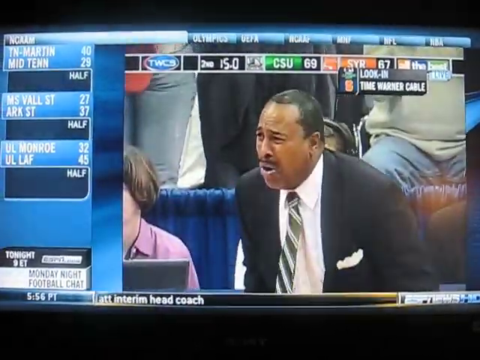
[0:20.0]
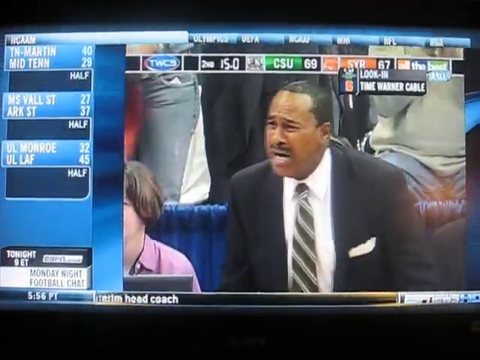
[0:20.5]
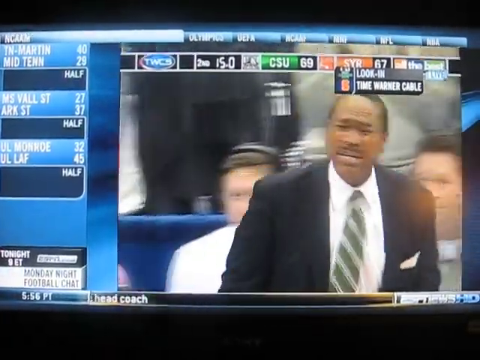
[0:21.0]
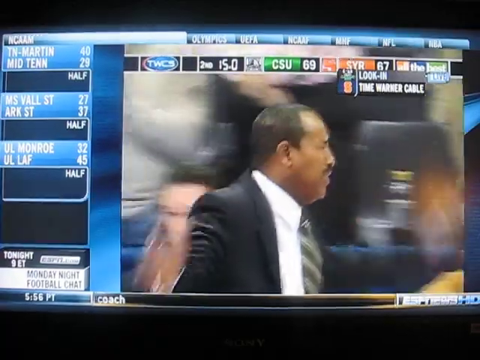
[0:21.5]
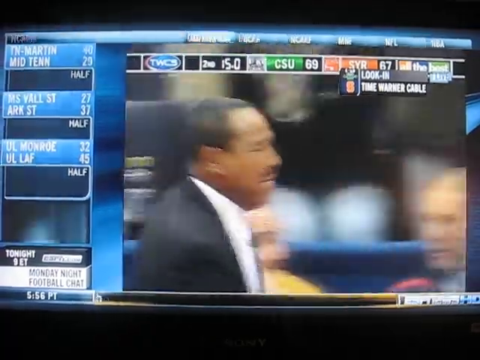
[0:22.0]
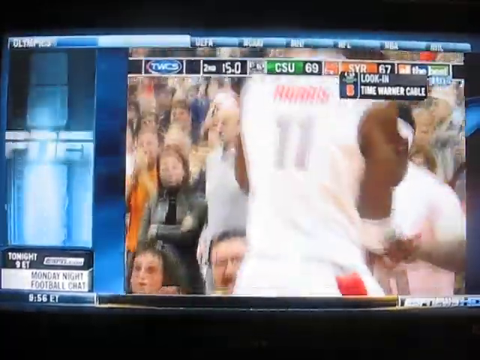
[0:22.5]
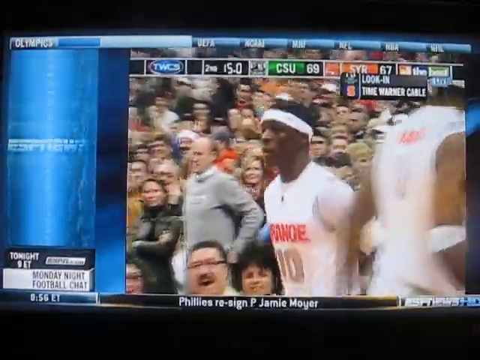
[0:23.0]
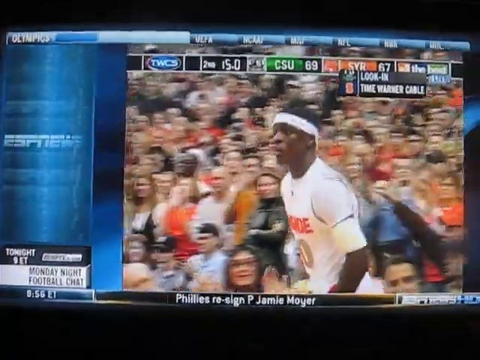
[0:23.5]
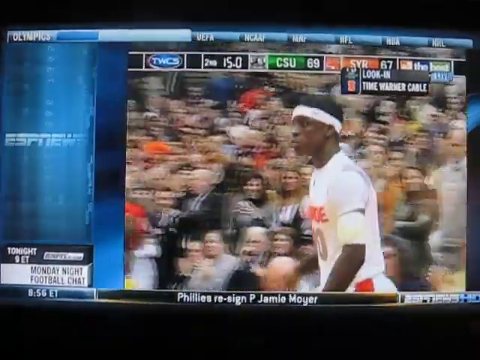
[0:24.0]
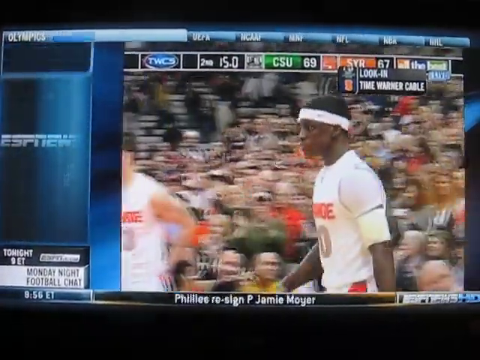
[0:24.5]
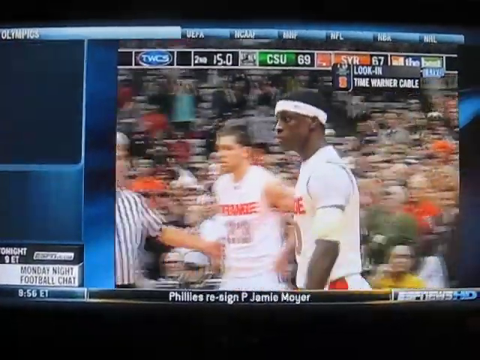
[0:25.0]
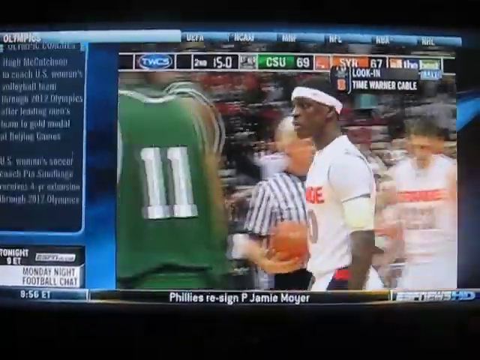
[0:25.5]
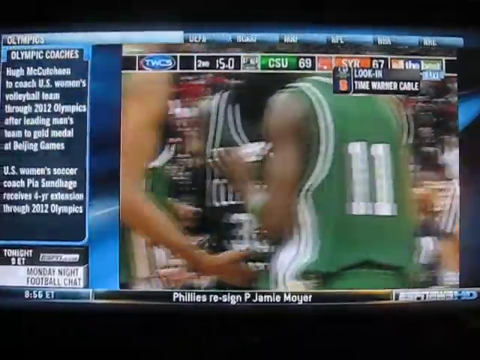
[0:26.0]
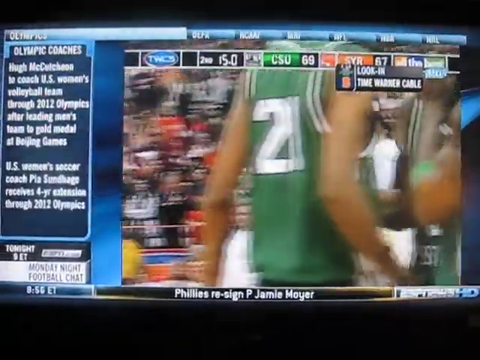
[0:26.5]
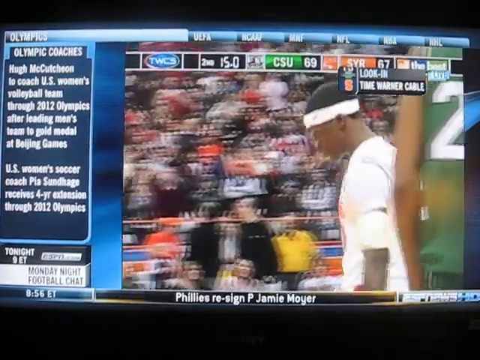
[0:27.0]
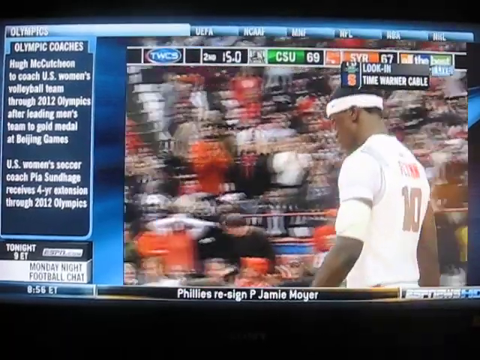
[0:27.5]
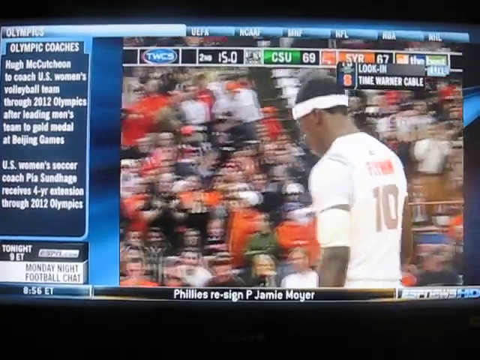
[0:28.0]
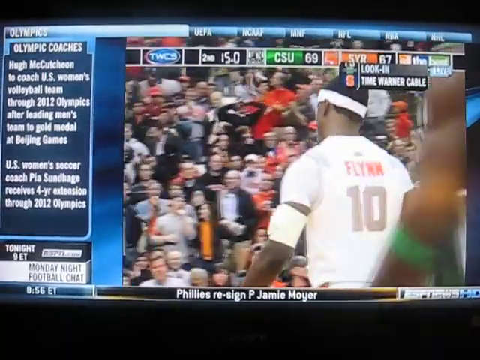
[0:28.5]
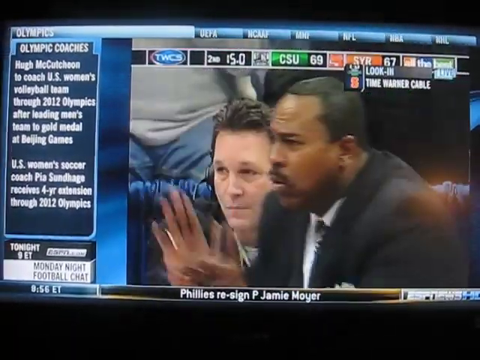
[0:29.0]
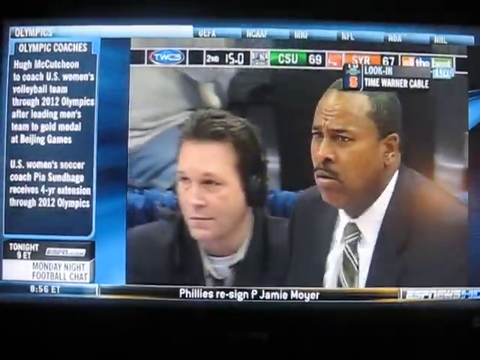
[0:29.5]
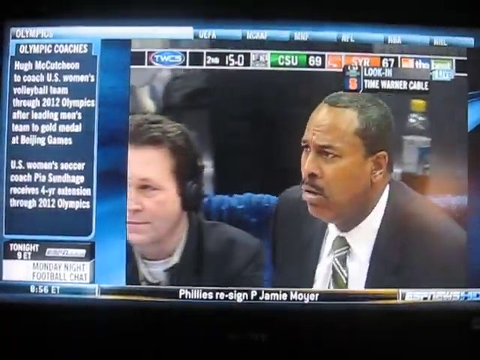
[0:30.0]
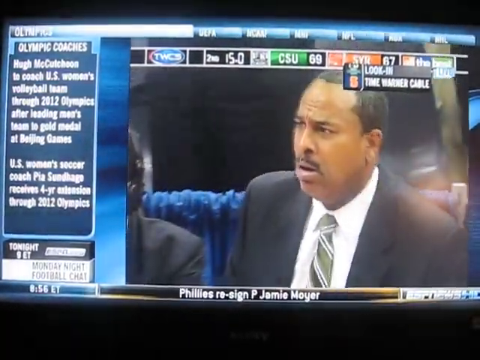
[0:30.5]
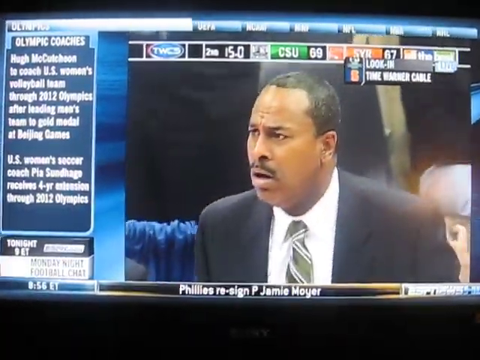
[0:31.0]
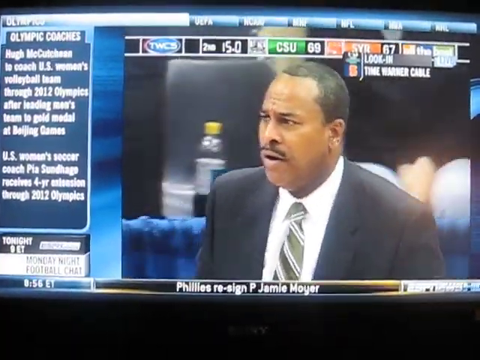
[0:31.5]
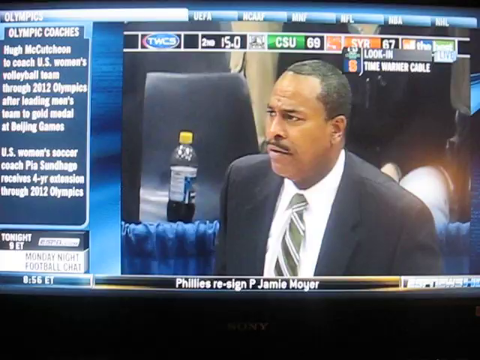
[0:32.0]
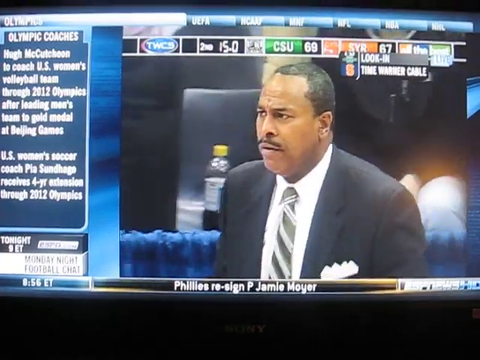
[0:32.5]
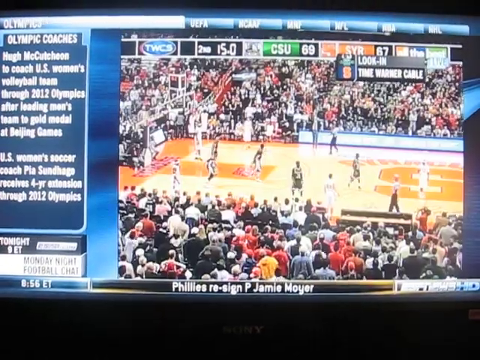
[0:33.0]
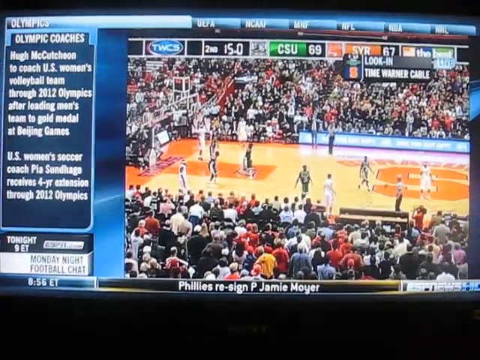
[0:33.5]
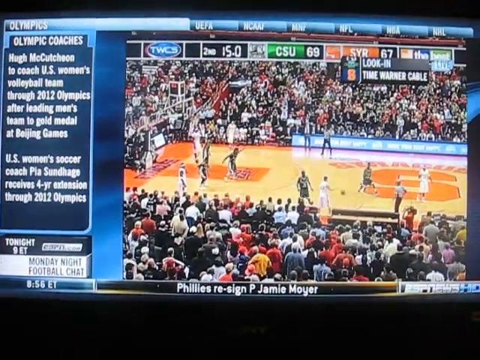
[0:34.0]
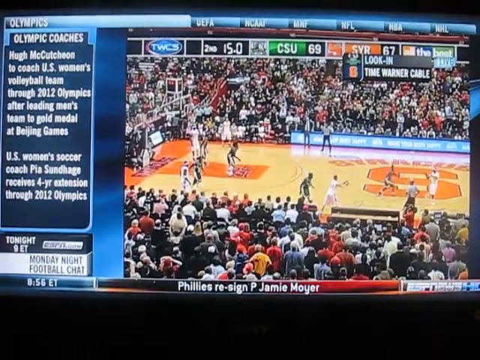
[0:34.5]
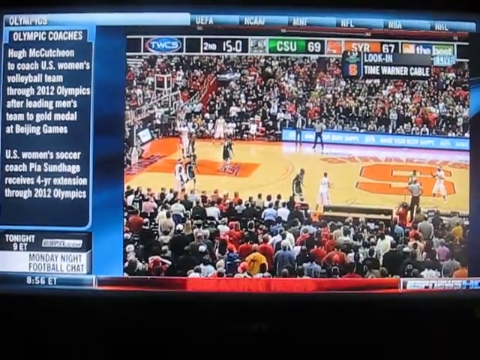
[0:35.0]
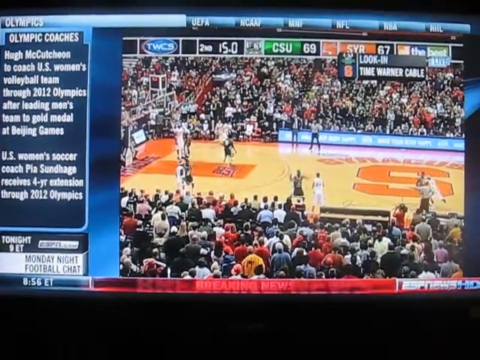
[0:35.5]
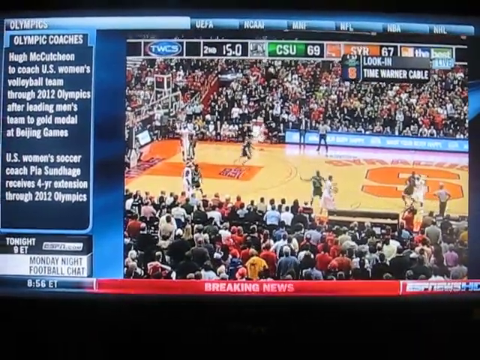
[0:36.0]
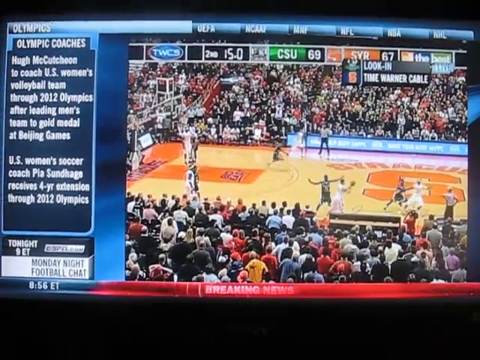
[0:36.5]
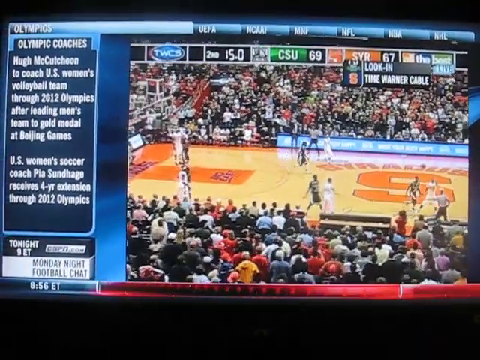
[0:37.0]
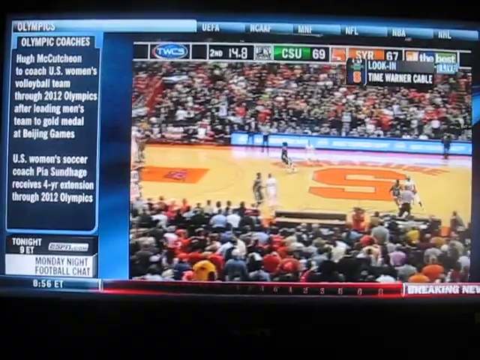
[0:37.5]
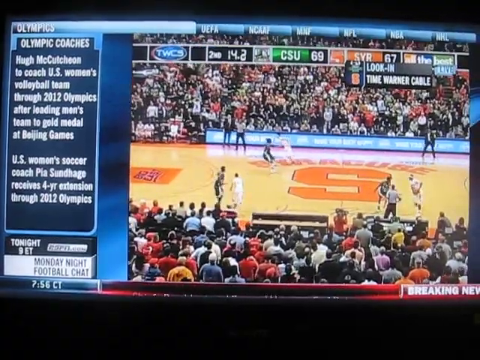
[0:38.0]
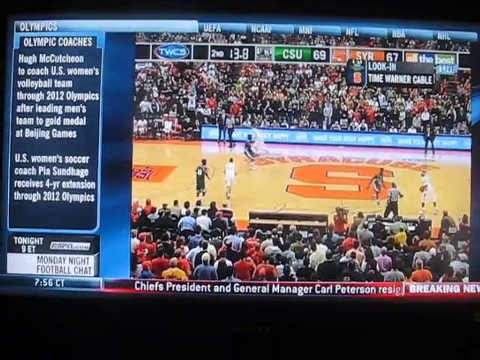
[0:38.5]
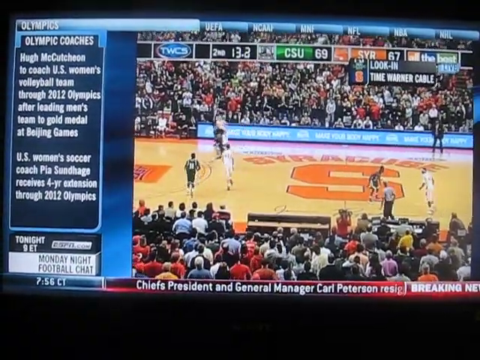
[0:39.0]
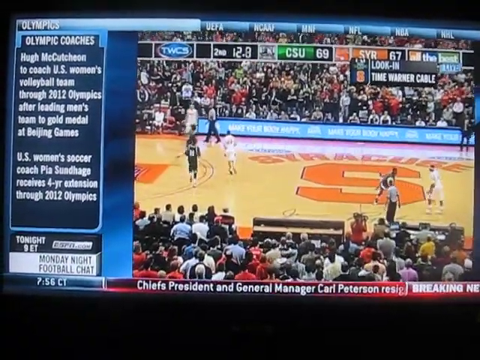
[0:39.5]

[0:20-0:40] The Black man has a thin mustache and very short cropped hair, and wears a white dress shirt, a black jacket with a white handkerchief in his left pocket, and a black and white striped tie. He is sitting next to someone, apparently a woman, who holds a notebook. His mouth forms an O shape, and the crawler at the bottom of the ESPN News screen reads "last interim head coach". The coach turns his head to the left, walks away, and brings his hands down and up, looking very disappointed. Players in white jerseys substitute, one going out and one going in; the one going in wears a white headband. The referee has the ball and talks to a player in a white jersey while three players in green jerseys form a huddle. The player with the white headband keeps walking. The shot switches back to the coach, his brows furrowed, watching the action. The ball is passed between two players in white jerseys, a player in green lifts his arm to try to block a shot, the ball is passed to a player in a white jersey, and he dribbles into the other half of the court.